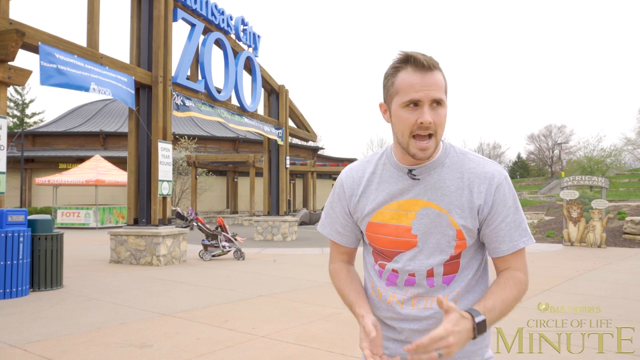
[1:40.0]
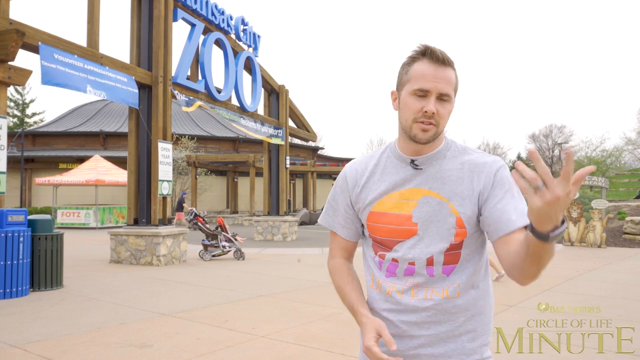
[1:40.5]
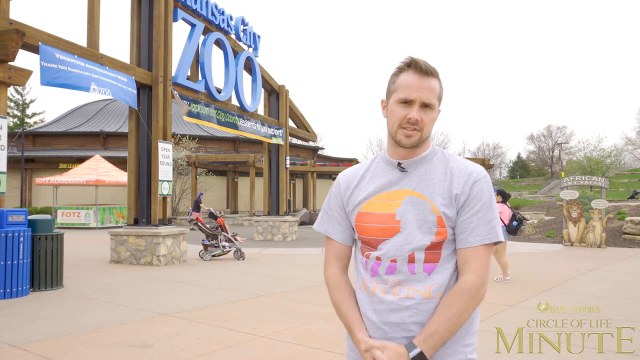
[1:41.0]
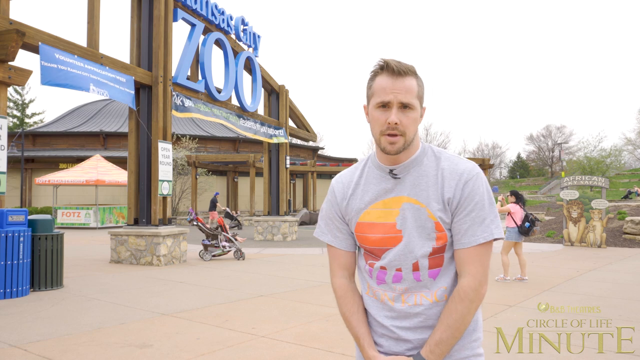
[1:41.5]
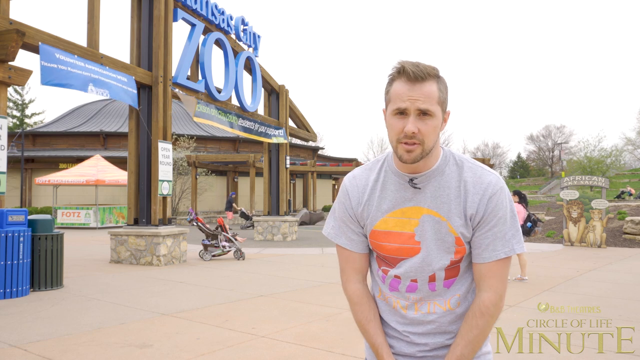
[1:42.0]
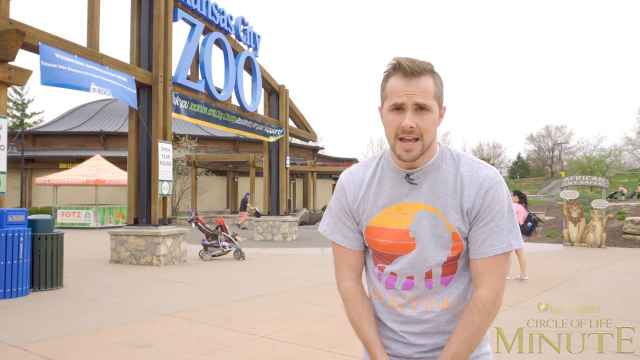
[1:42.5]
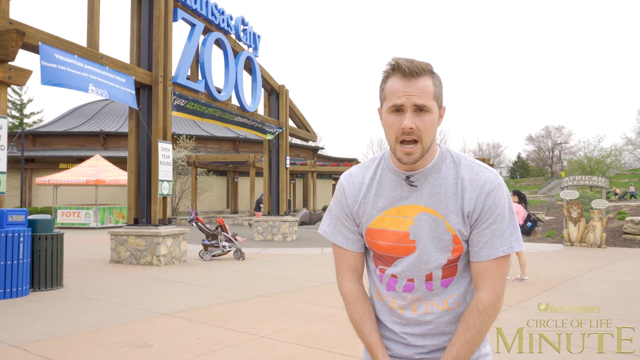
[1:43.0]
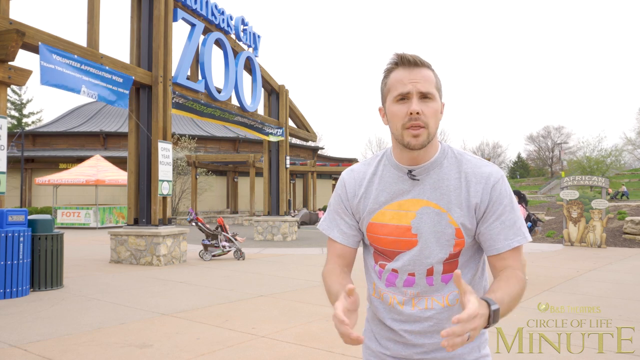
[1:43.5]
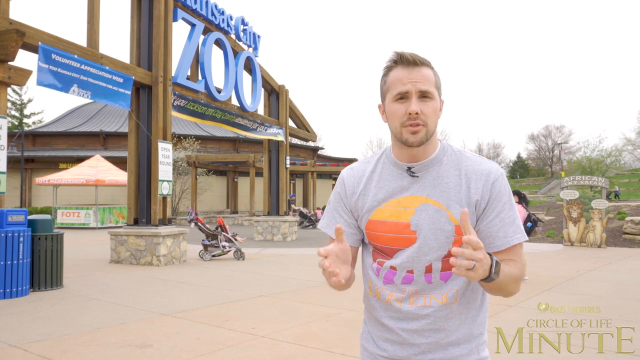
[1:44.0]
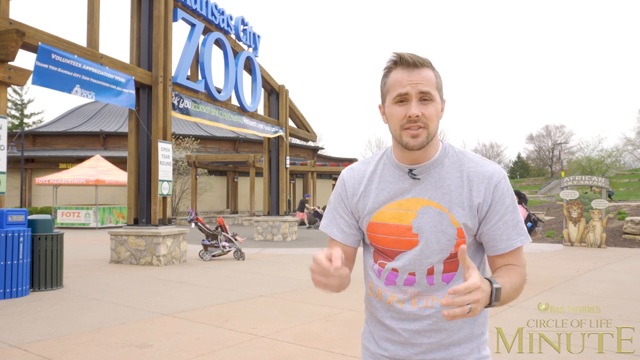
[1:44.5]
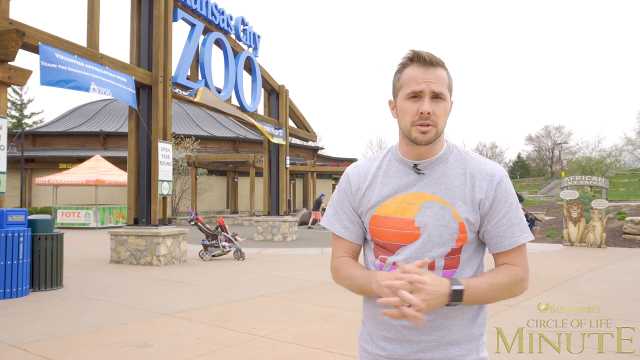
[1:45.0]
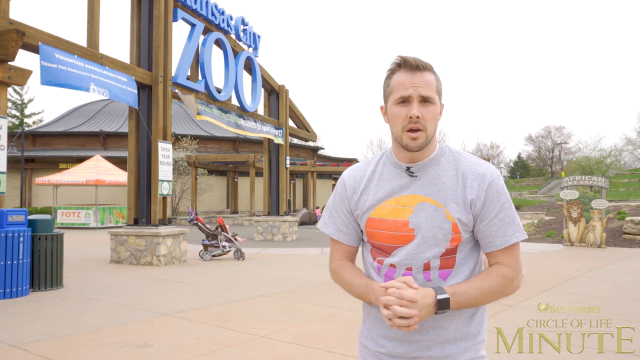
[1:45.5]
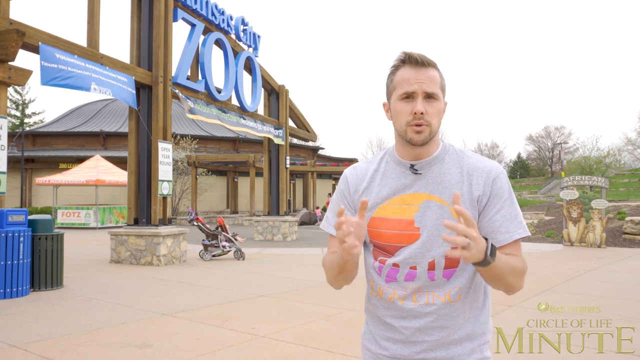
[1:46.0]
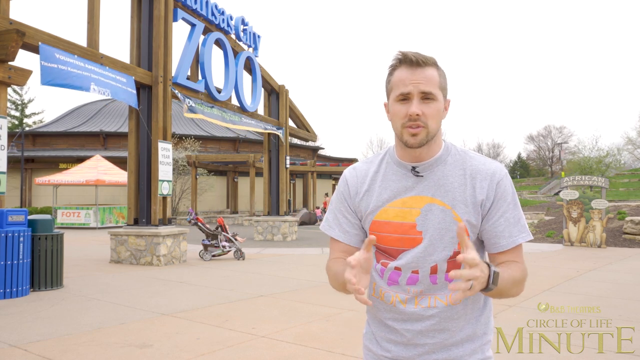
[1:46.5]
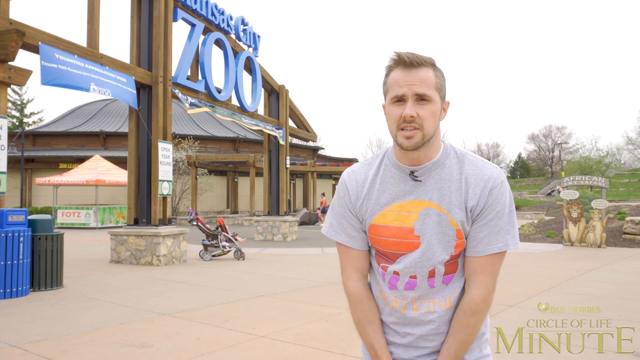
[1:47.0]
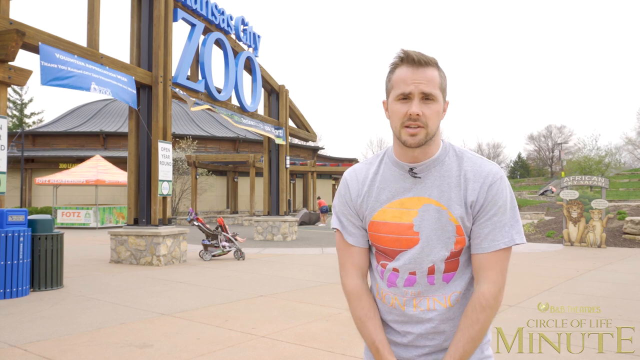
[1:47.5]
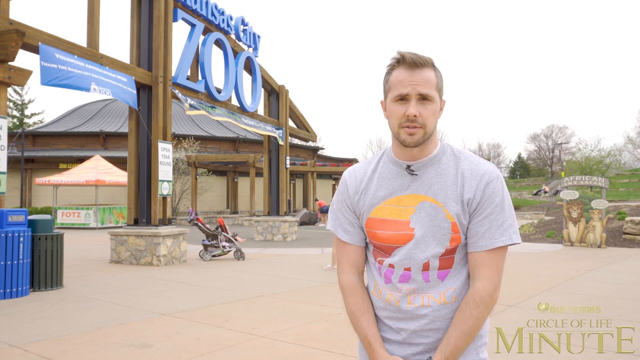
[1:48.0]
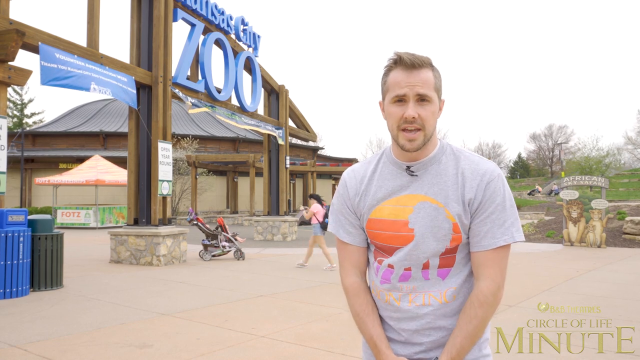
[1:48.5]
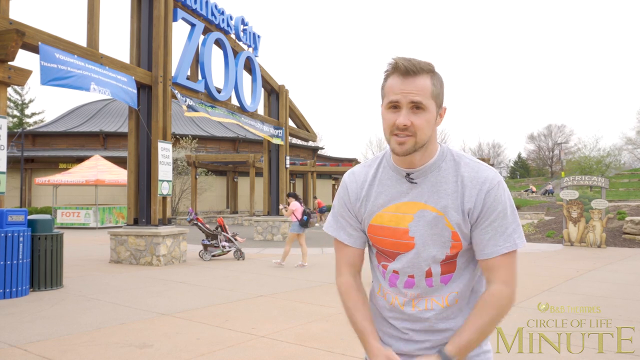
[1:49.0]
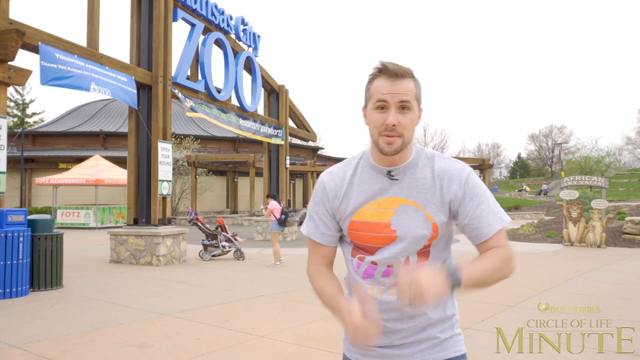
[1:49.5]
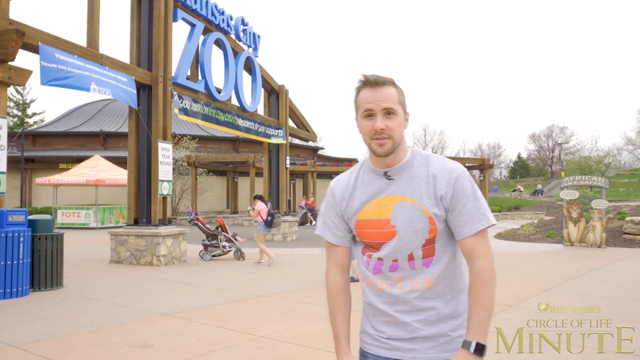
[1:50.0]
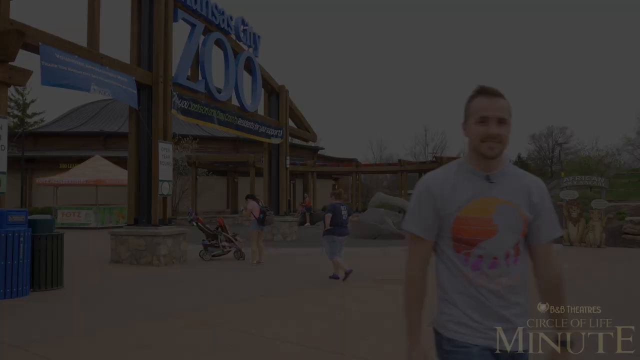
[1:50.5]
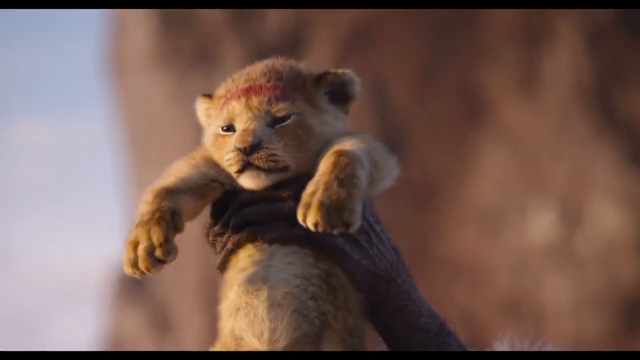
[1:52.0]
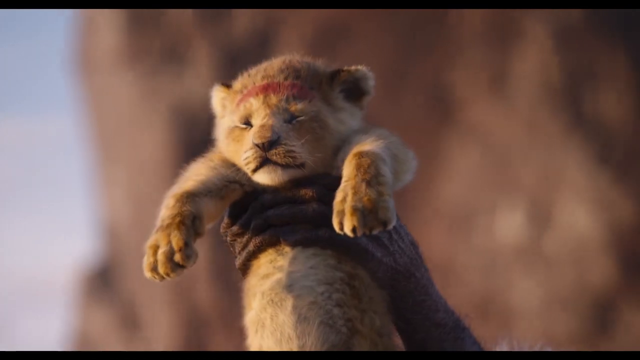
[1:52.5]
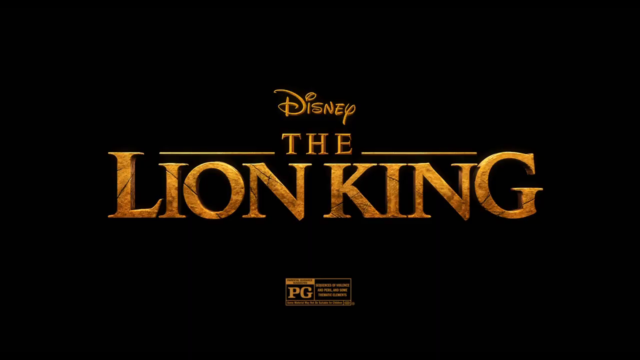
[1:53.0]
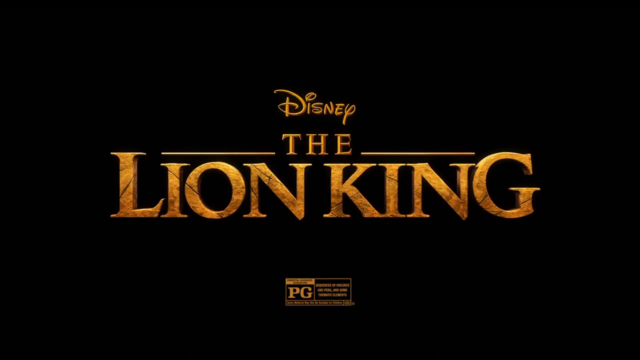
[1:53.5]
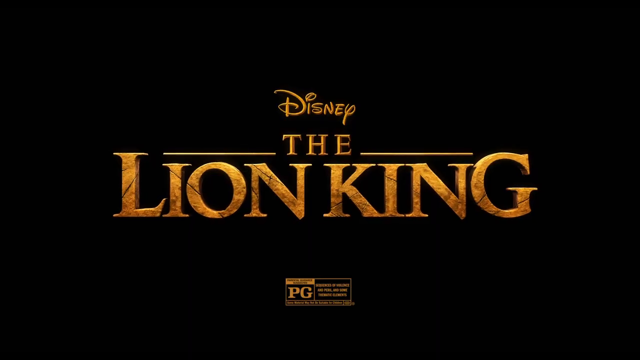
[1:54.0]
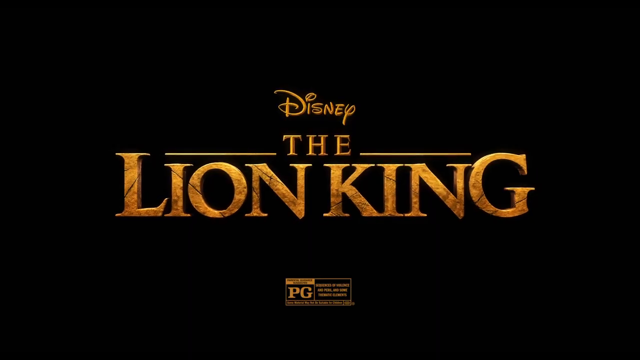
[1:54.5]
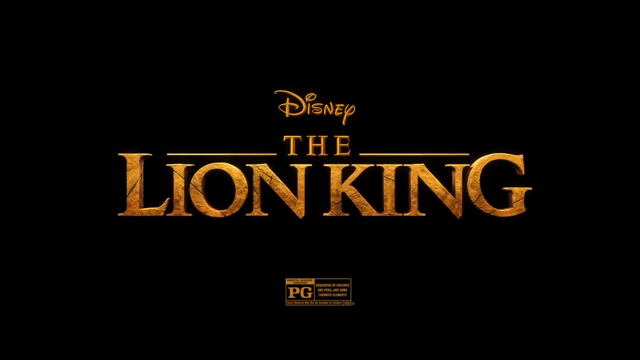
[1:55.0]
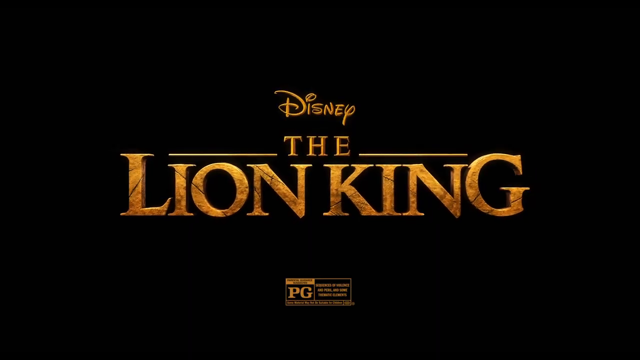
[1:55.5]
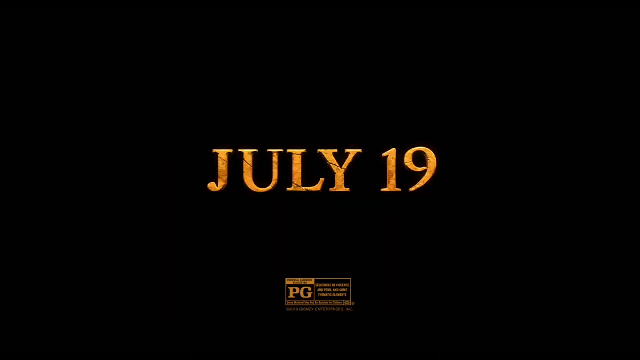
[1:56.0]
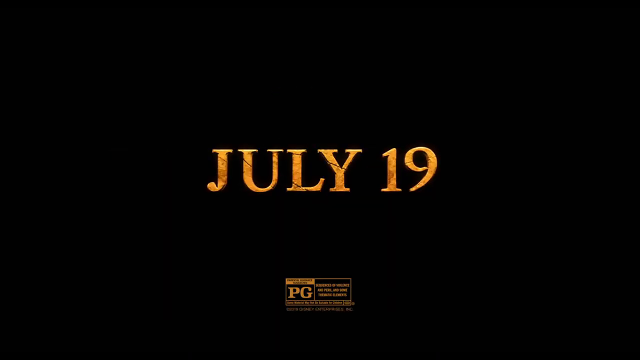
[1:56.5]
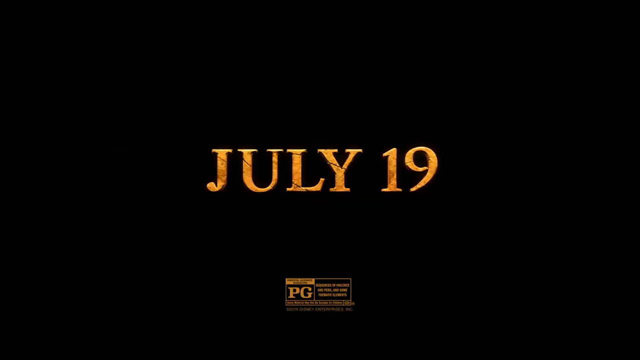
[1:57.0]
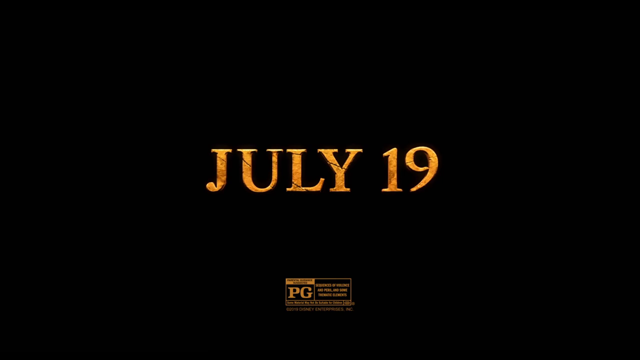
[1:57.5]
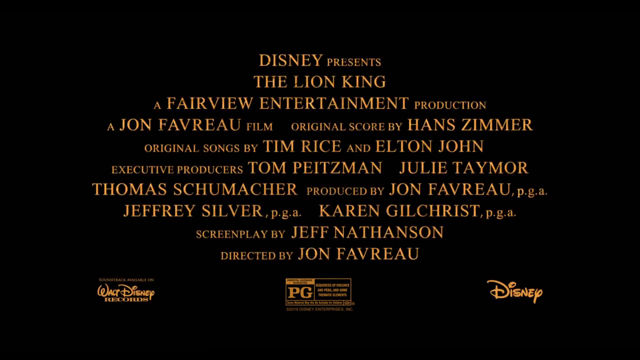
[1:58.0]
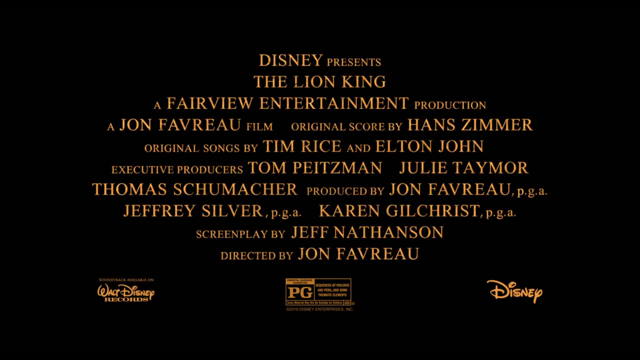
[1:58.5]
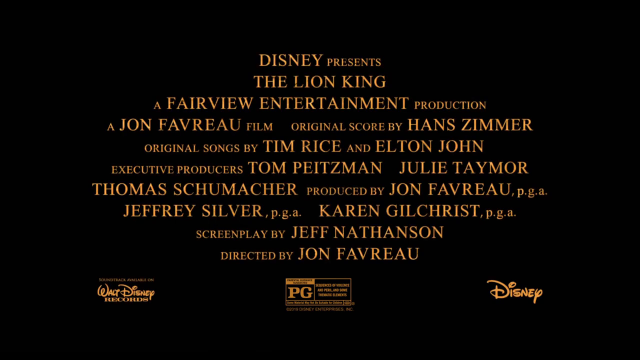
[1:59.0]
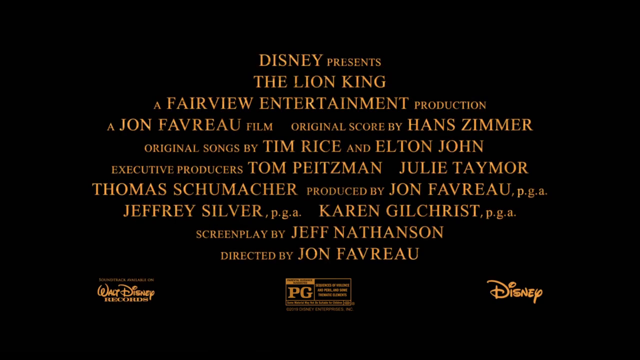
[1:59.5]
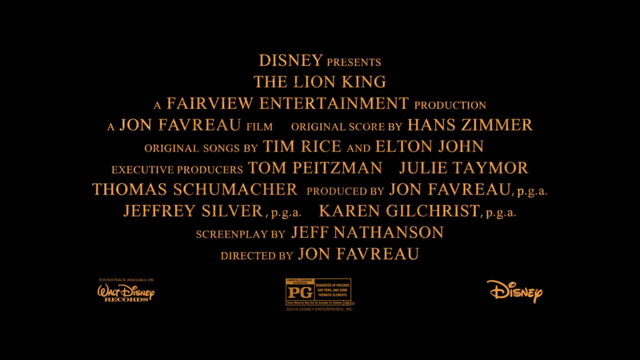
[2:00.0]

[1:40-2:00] The blonde man with short hair in the gray t-shirt continues speaking to the camera, moving his hands as he talks; he puts his hands together at the height of his crotch, then raises them again and starts pointing down while speaking. The Kansas City Zoo sign on the wooden structure is behind him, with a big stroller under the sign. The screen cuts to black, followed by a hyper-realistic animation of a lion cub with some red paint on his forehead being grabbed by a large black hand. The Disney The Lion King logo appears on the screen with "July 19." The last screen reads "Disney presents The Lion King, a Fairview Entertainment production, a Jon Favreau film, original score by Hans Zimmer, original songs by Tim Rice and Elton John, executive producers Tom Peitzman, Julie Taymor, Thomas Schumacher, produced by Jon Favreau, Jeffrey Silver, Karen Gilchrist, screenplay by Jeff Nathanson, and directed by Jon Favreau."